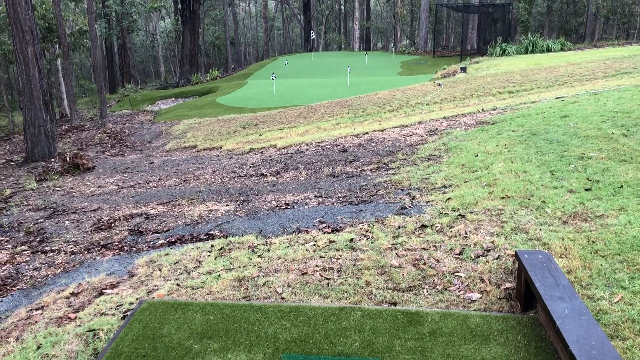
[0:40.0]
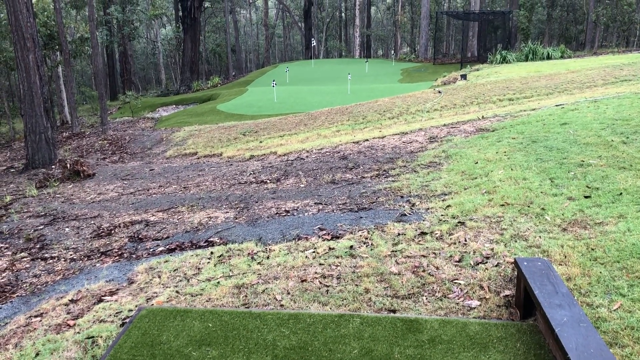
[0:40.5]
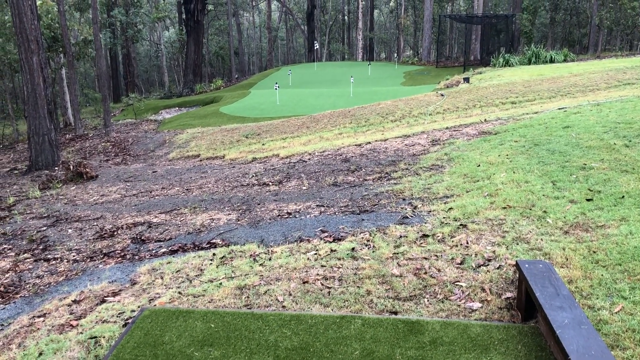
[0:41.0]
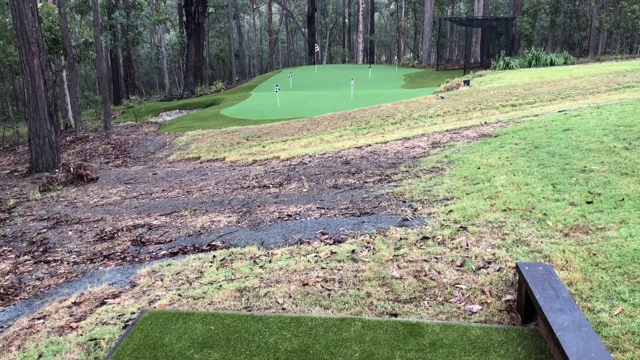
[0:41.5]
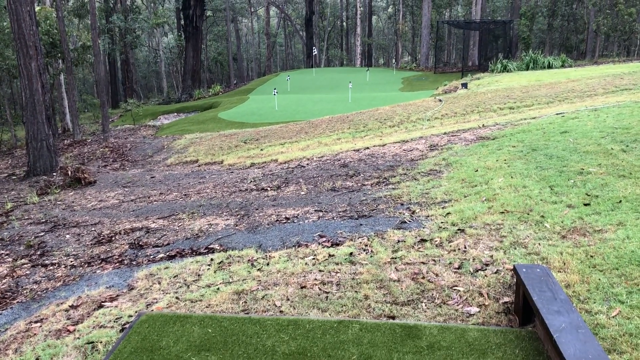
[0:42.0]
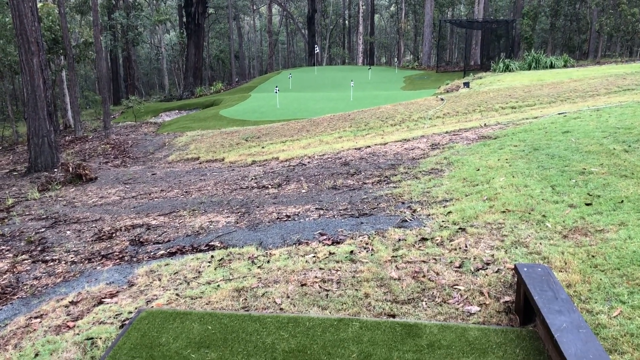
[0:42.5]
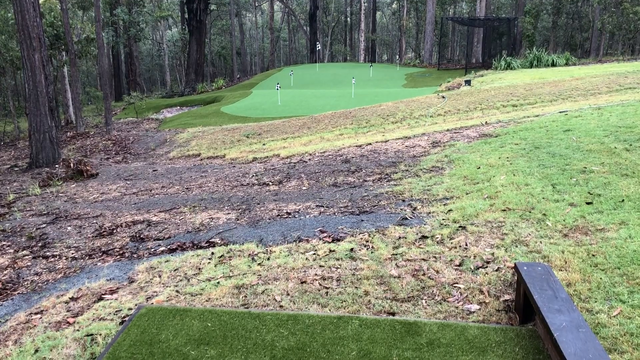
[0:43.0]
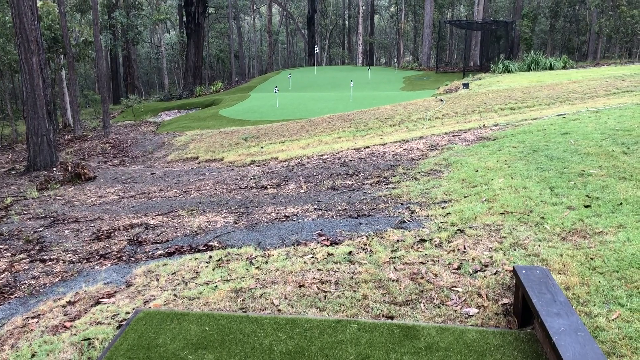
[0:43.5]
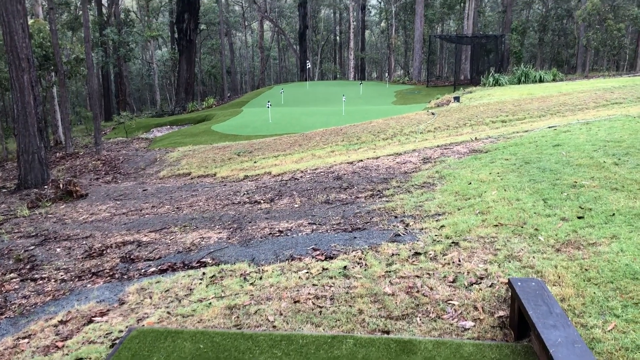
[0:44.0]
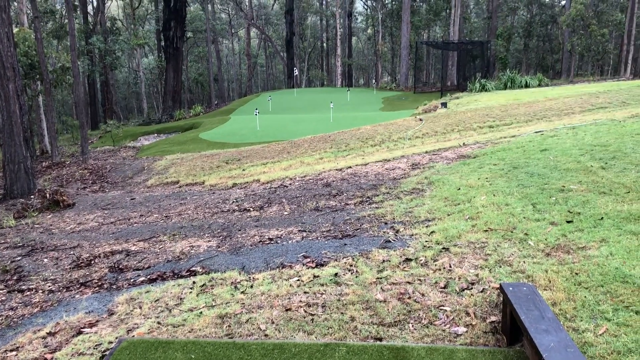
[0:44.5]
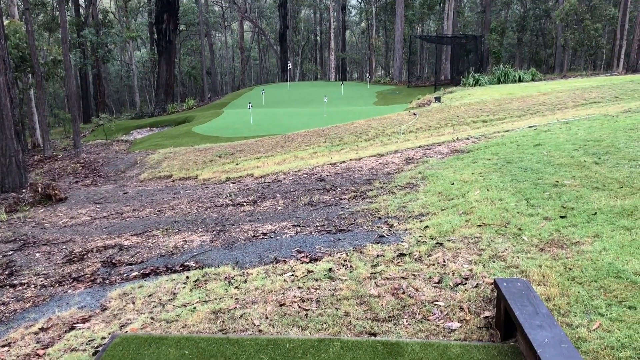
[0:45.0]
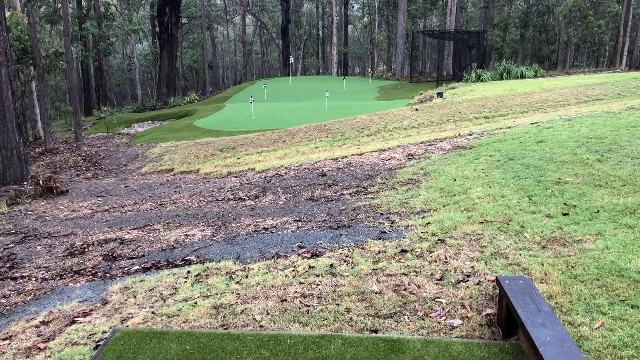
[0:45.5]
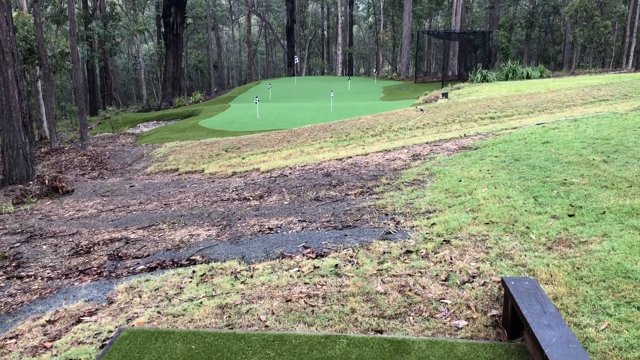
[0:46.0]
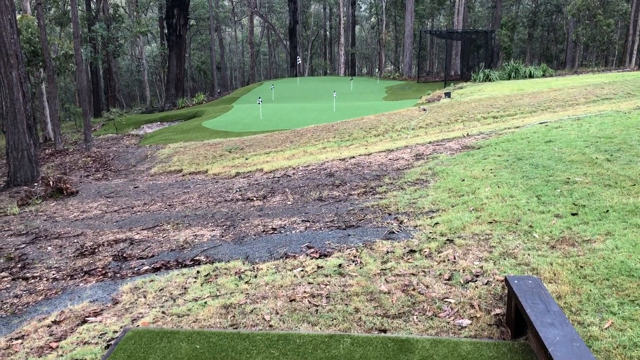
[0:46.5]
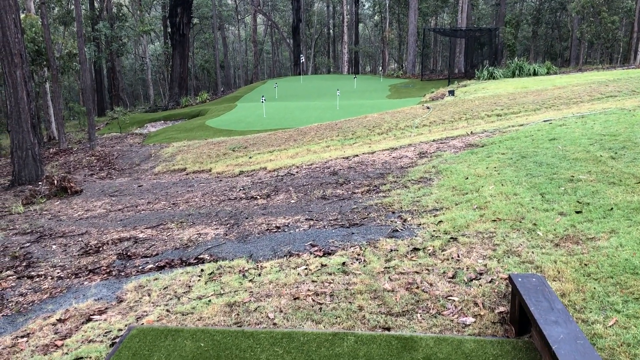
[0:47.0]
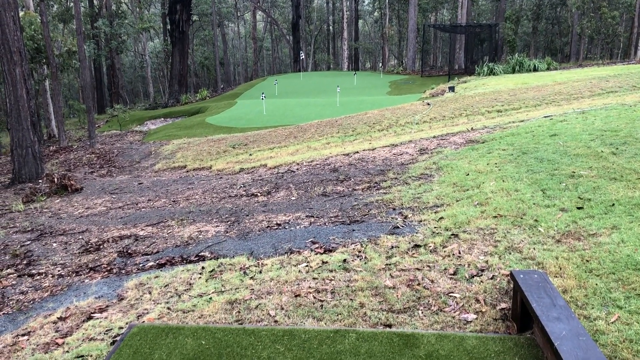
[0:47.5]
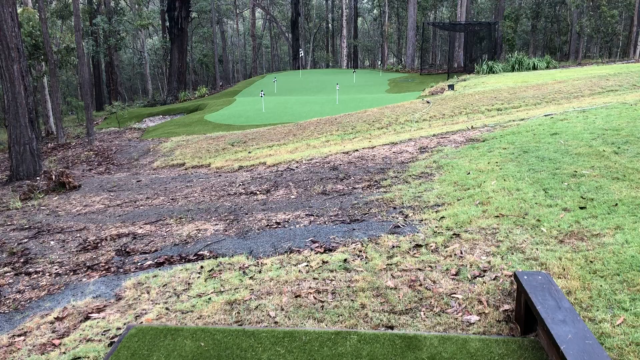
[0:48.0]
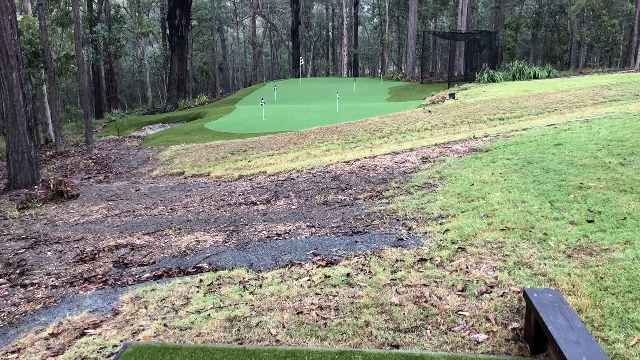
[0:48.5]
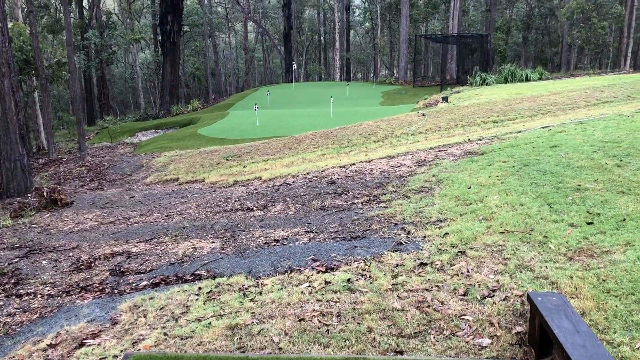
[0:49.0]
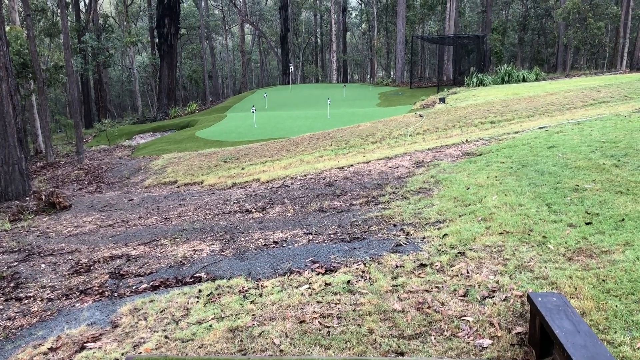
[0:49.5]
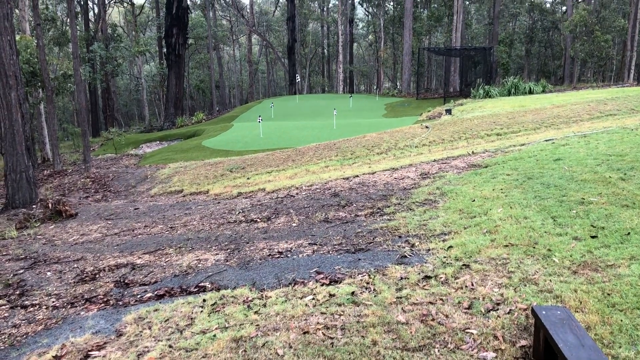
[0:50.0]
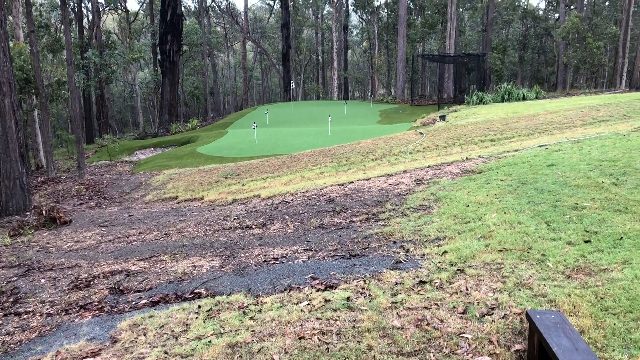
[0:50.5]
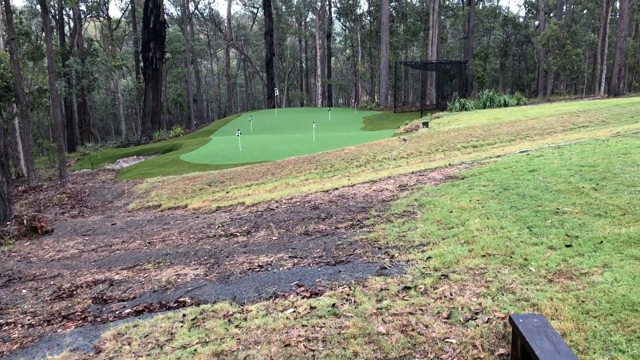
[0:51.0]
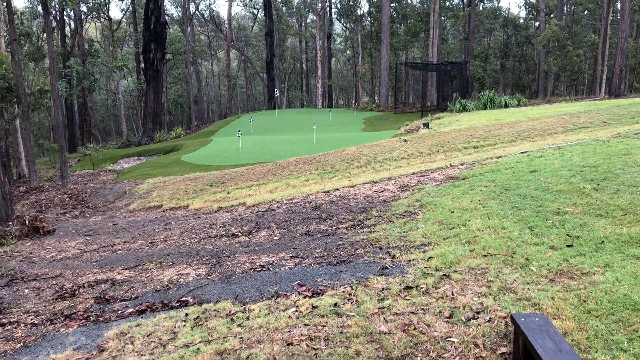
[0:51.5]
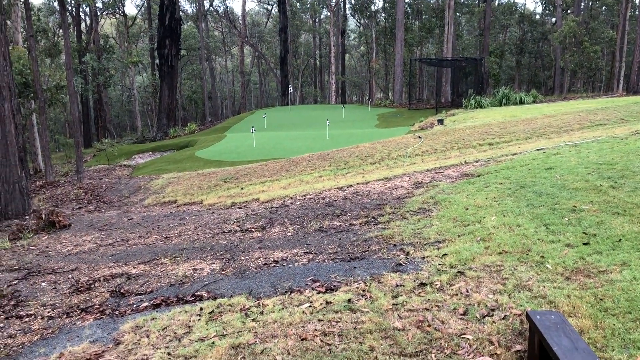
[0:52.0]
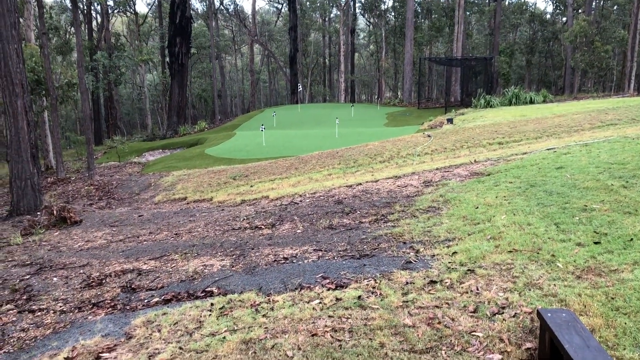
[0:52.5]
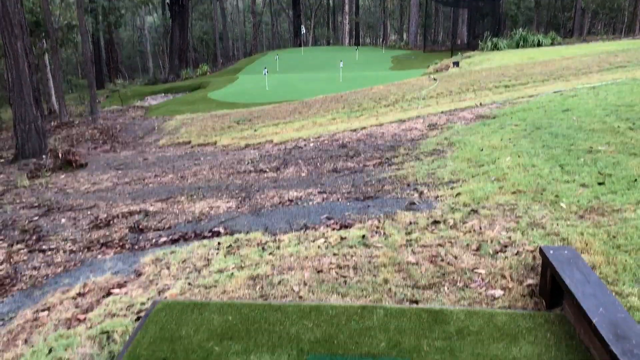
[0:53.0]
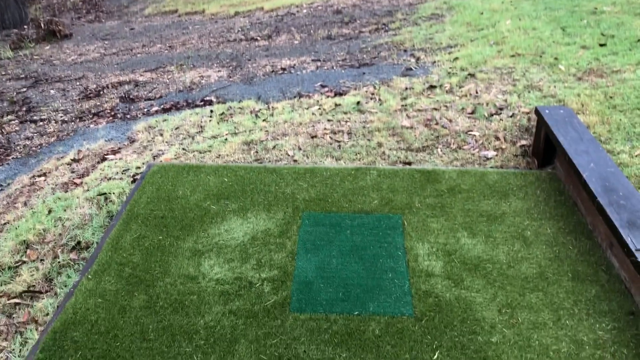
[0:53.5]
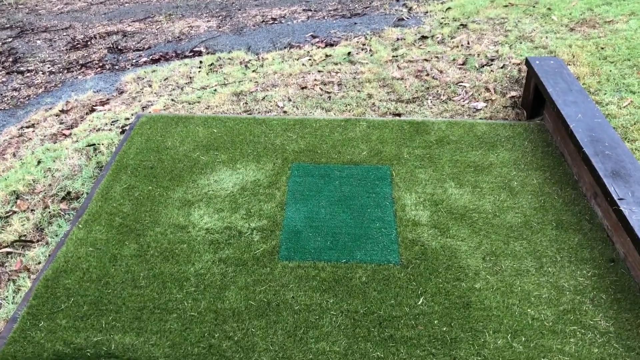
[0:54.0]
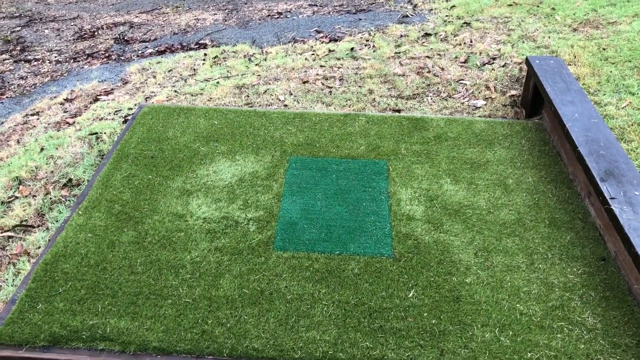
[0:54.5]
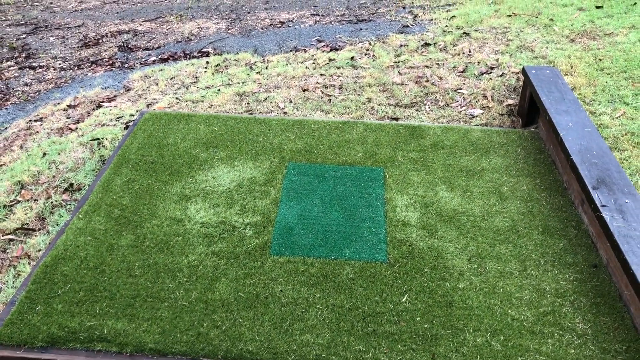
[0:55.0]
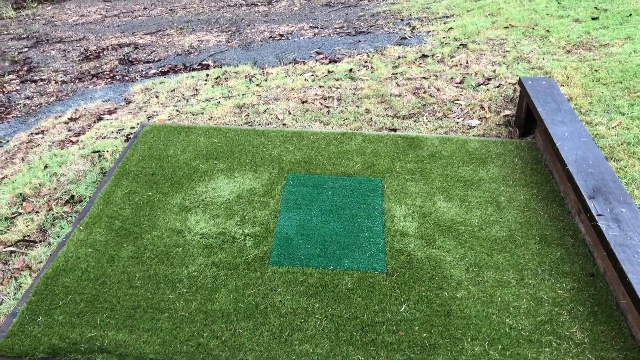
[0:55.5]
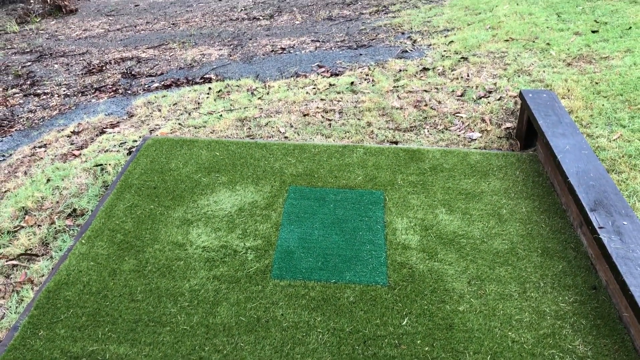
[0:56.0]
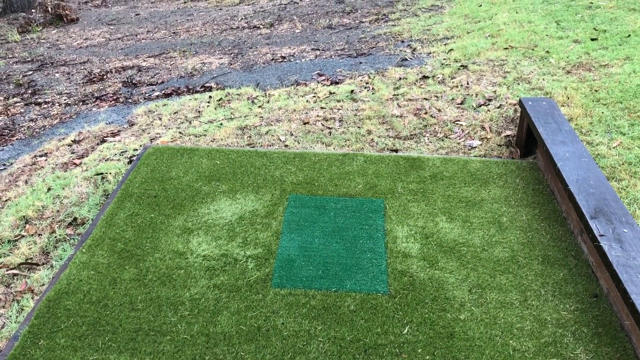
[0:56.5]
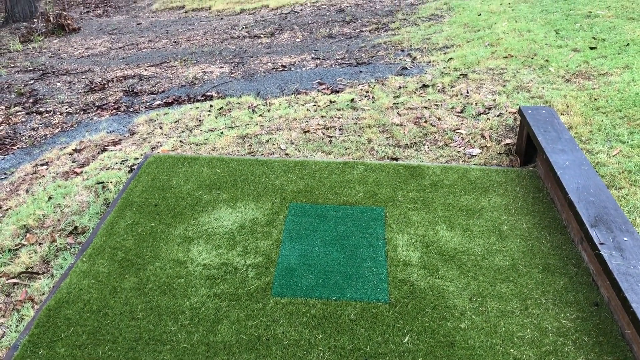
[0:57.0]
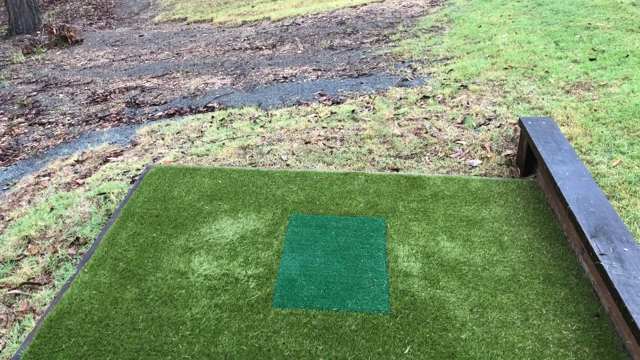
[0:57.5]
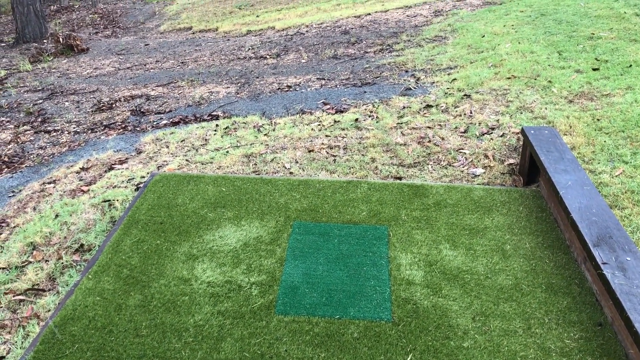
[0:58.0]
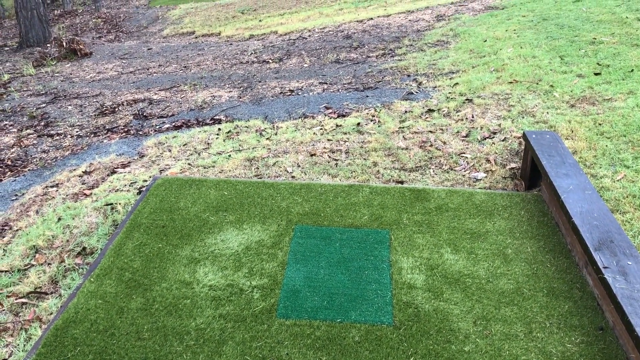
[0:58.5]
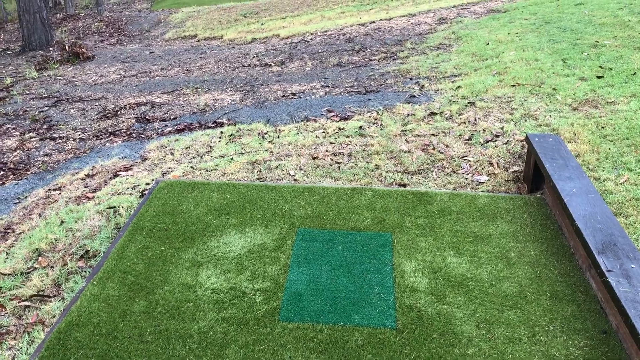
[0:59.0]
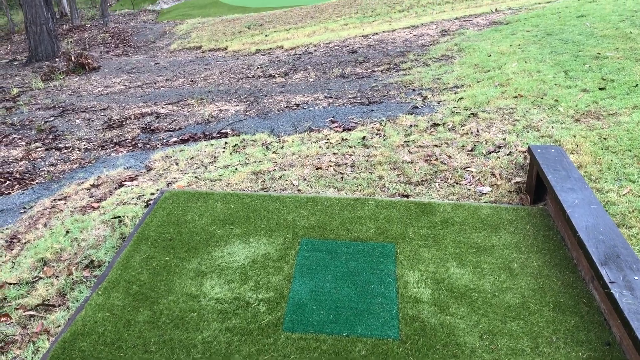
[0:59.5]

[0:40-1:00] The flat outdoor structure, probably about 6 by 4, has green astroturf with a square in the middle. In the distance is a green with six flags. Woods are in the distance between the tee-off and the green. There is brown grass, then some dead spots, and then some lighter grass. The distance to the green is probably about 100 yards, perhaps a little more or a little less.